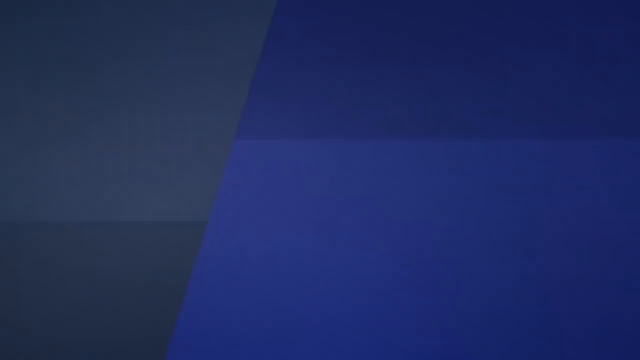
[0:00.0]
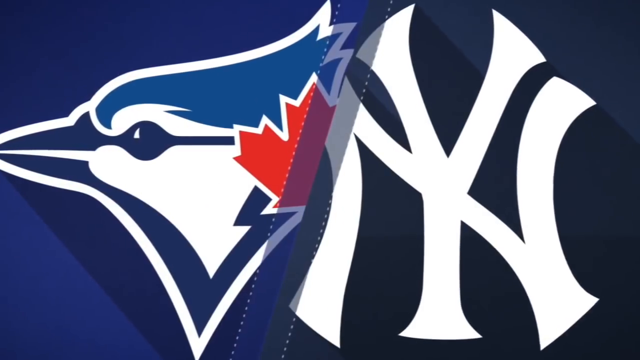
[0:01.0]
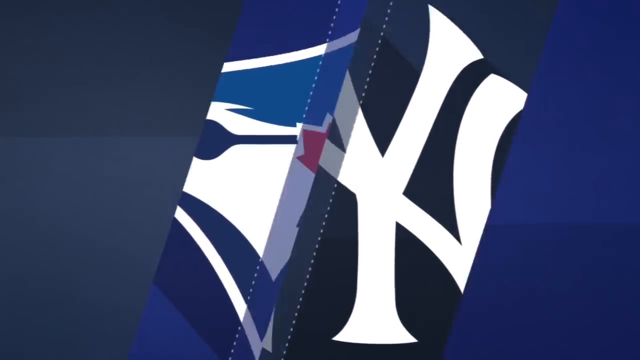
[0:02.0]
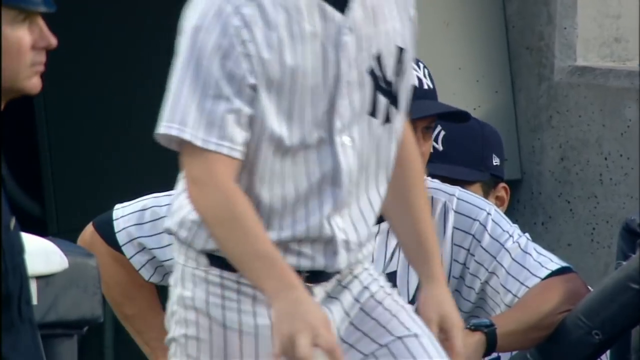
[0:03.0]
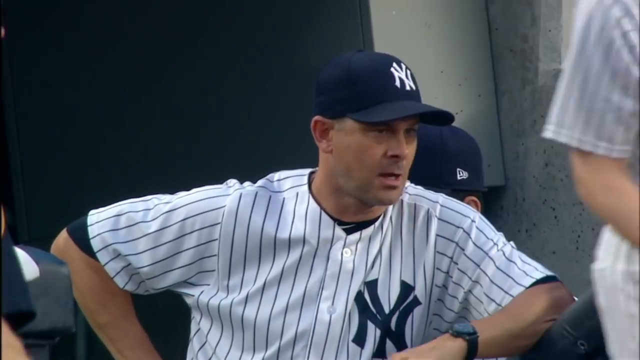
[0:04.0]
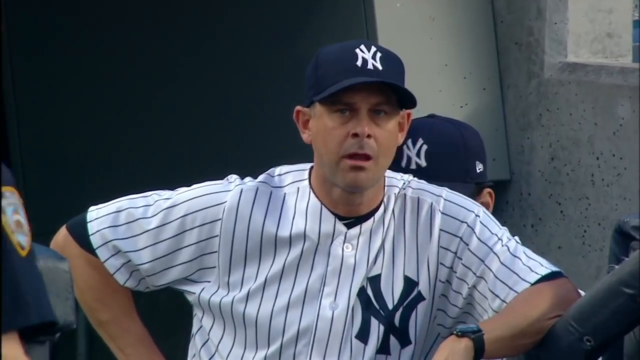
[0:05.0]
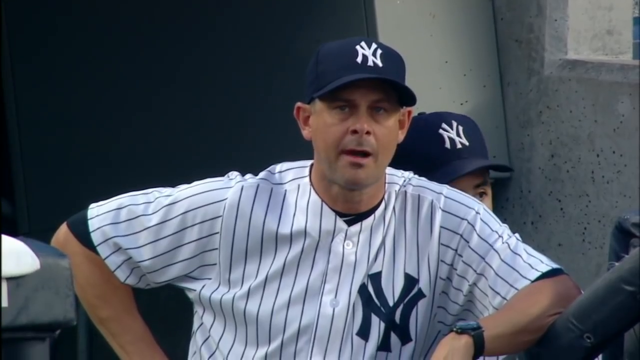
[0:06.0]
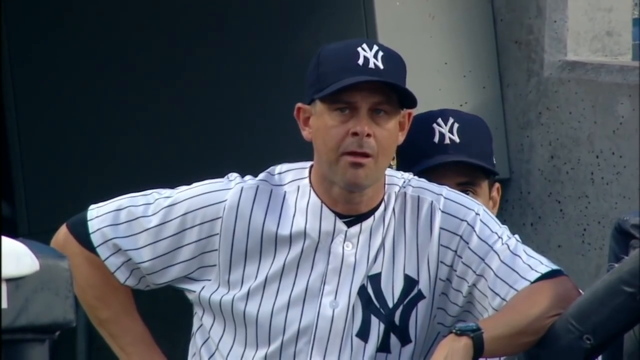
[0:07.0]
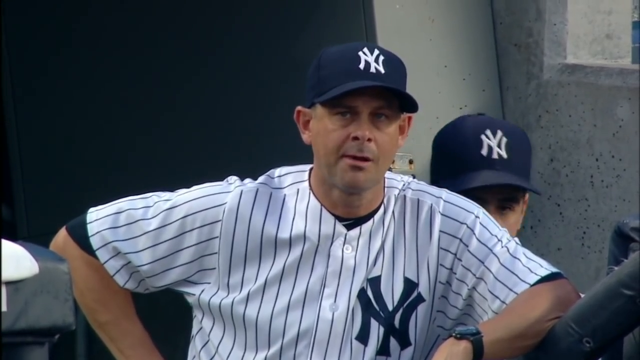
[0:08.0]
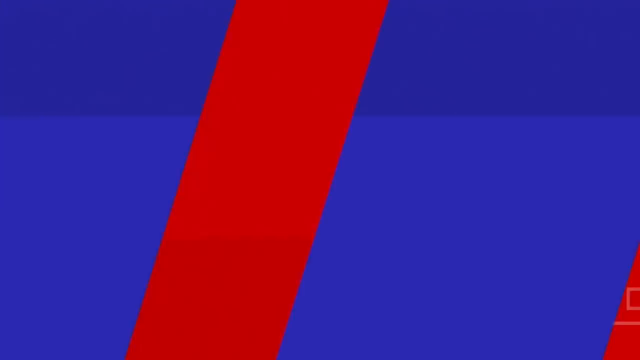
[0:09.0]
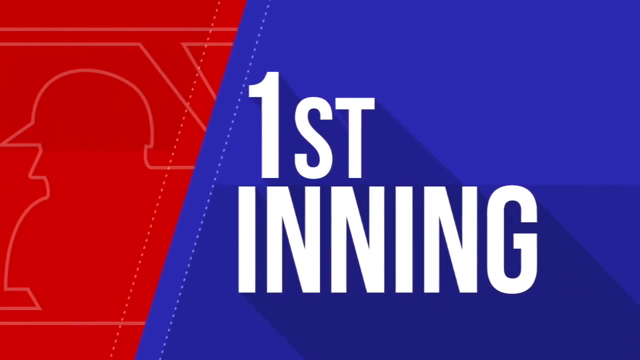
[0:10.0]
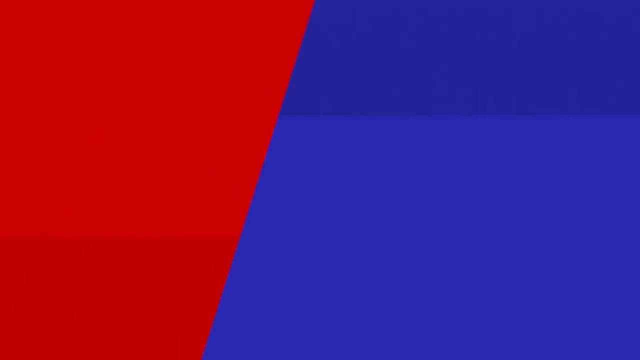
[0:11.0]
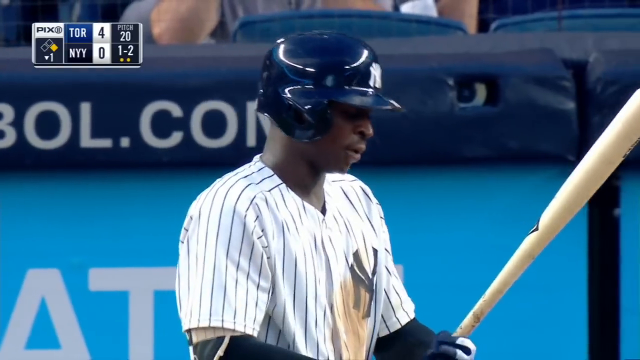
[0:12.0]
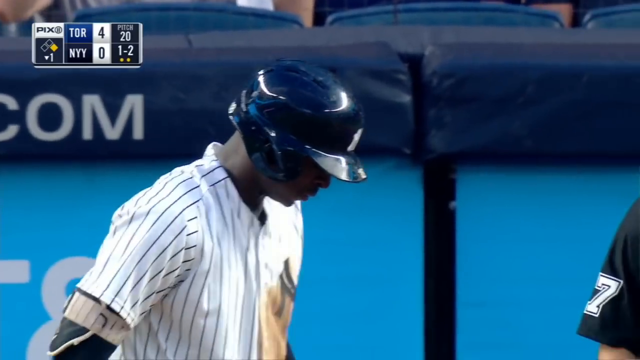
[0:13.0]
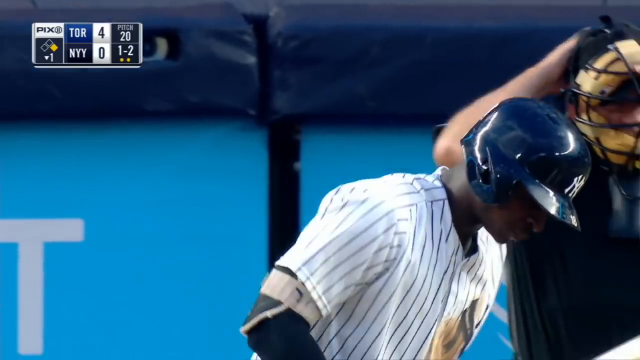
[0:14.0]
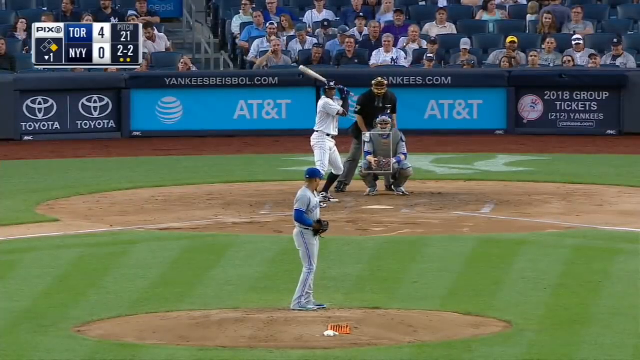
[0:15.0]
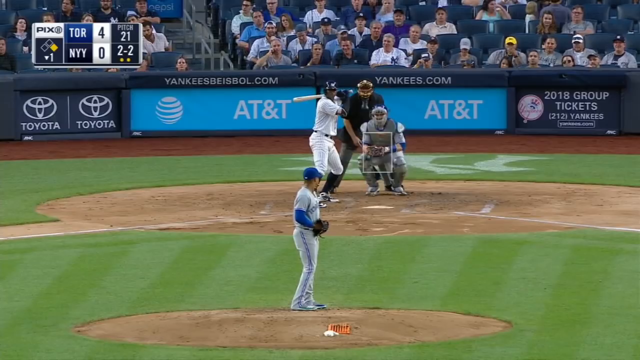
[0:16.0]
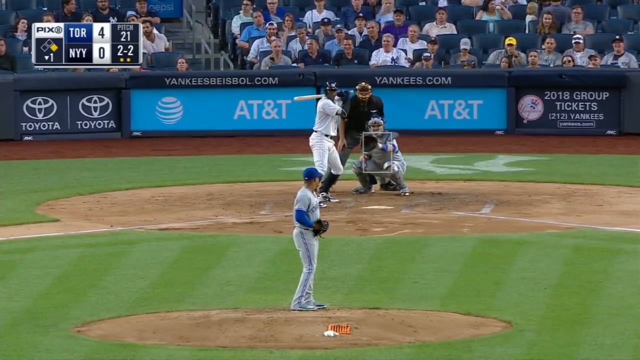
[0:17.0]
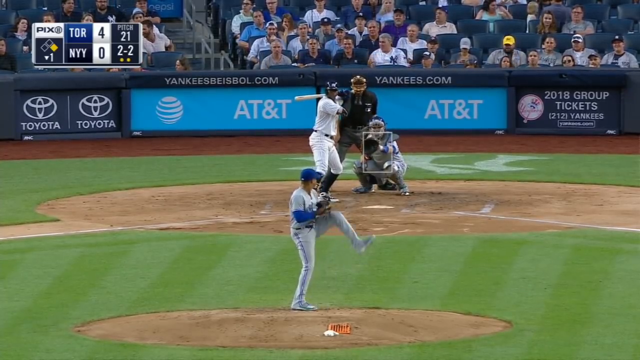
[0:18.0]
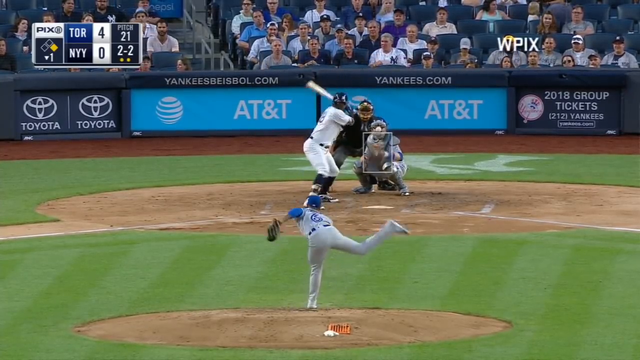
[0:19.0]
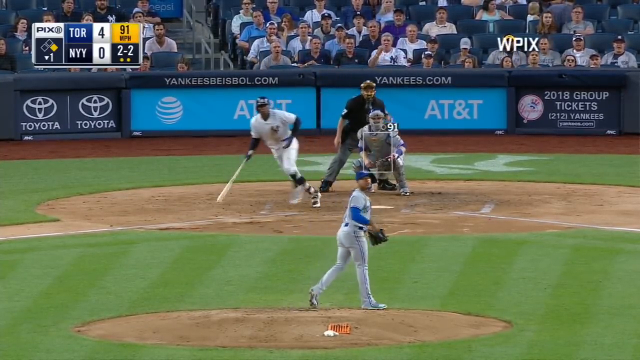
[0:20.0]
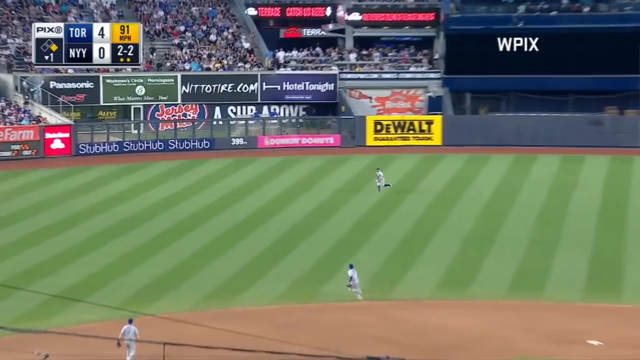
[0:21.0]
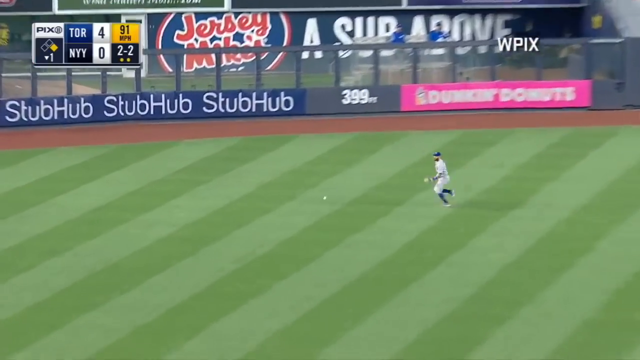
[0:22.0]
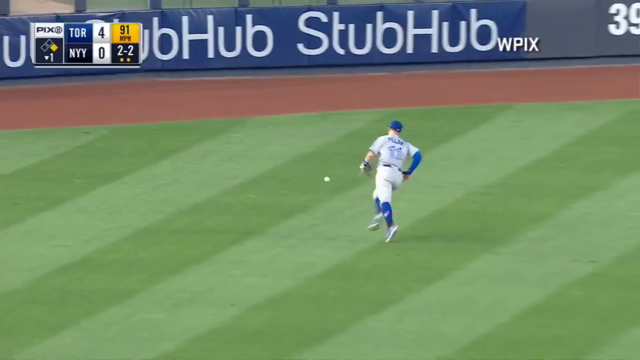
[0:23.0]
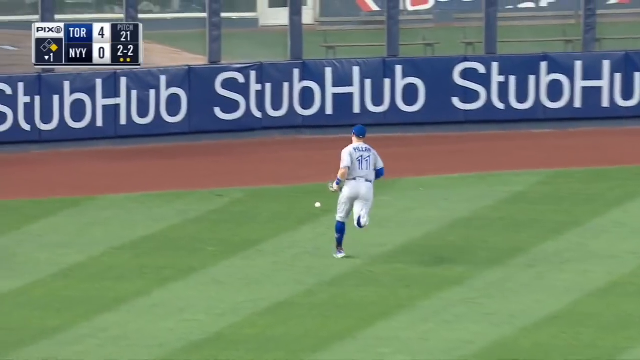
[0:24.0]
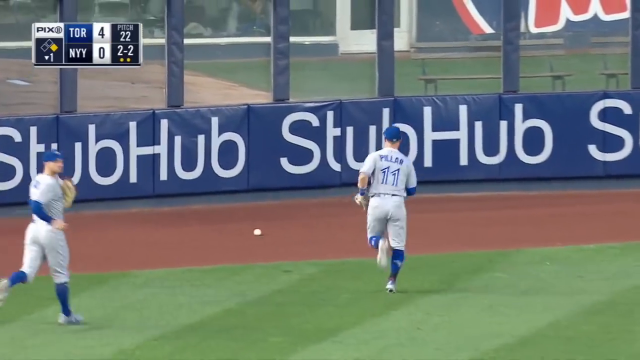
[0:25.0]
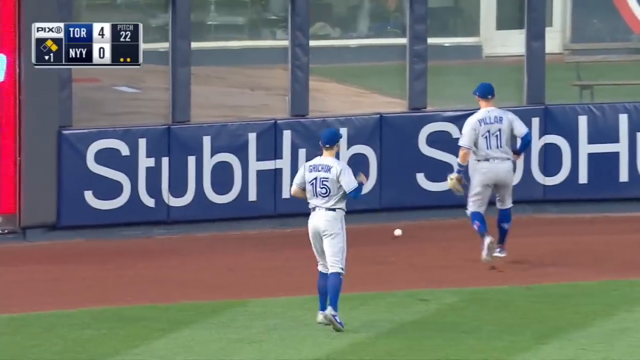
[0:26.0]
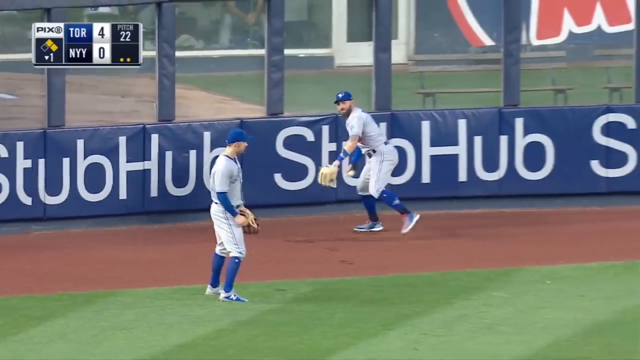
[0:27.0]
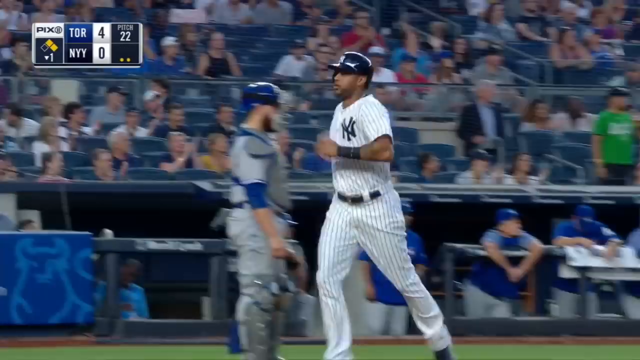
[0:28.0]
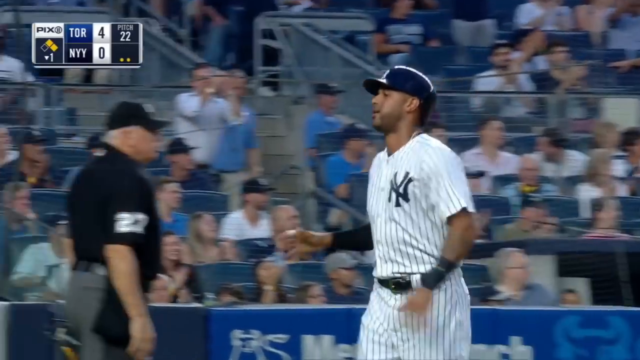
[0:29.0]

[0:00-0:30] The video moves to a close-up of the New York Yankees bench. On the left is the coach, only just visible: the front half of his head and the peak of his baseball cap can be seen. A player in a New York Yankees uniform strolls from the middle of the screen off toward the right. Next comes a close-up of a seated New York Yankees player, one arm leaning on a railing and the other kind of flat against his hip; he is chewing gum and wears a baseball cap. A screen then reads "first inning". A black New York Yankees player comes up to bat and hits the ball way out to the boundary, where fielder number 11 collects it and tosses it back to the pitcher.